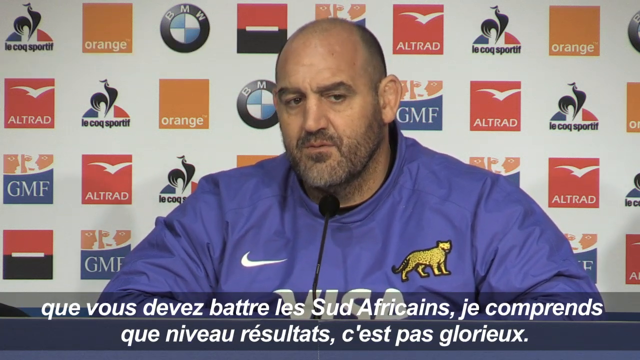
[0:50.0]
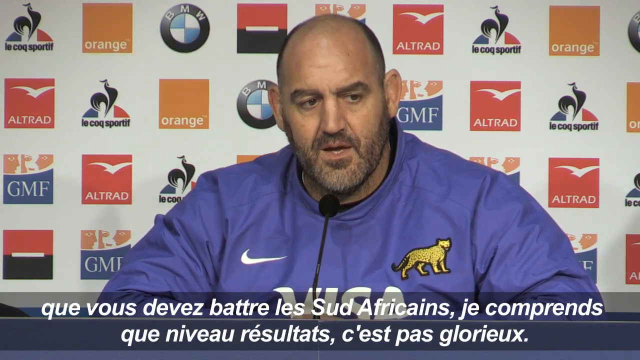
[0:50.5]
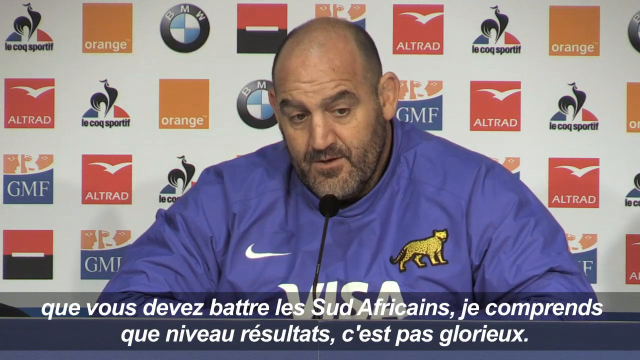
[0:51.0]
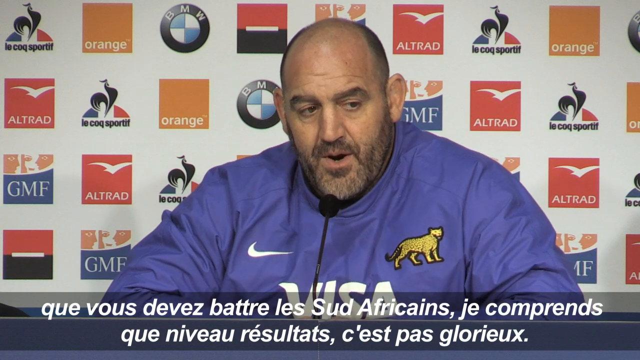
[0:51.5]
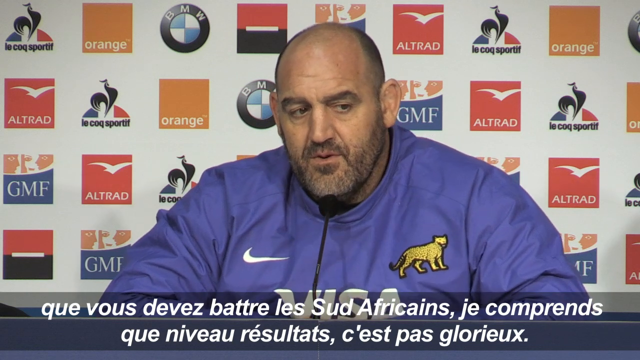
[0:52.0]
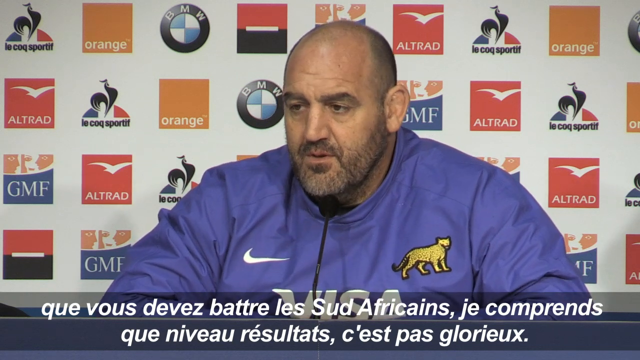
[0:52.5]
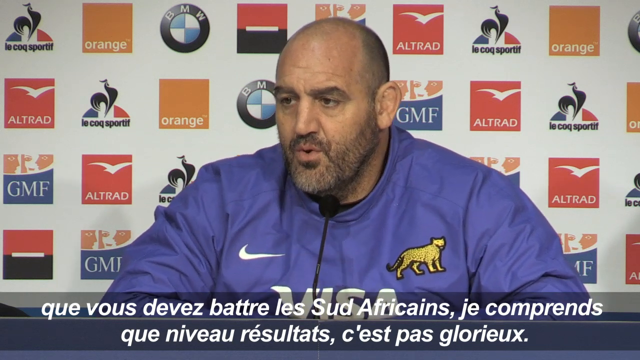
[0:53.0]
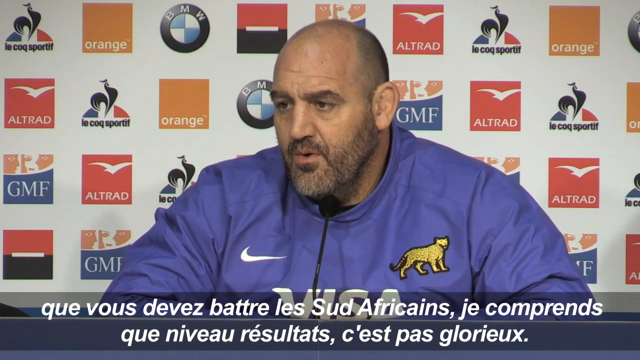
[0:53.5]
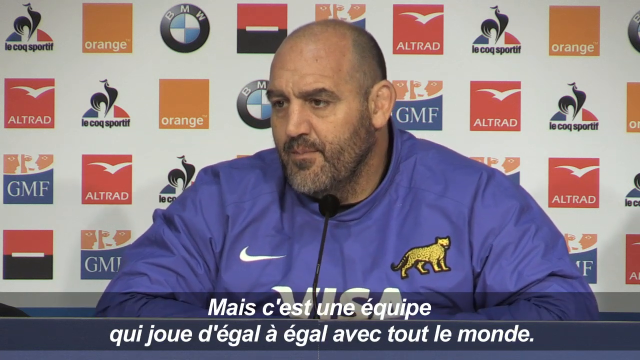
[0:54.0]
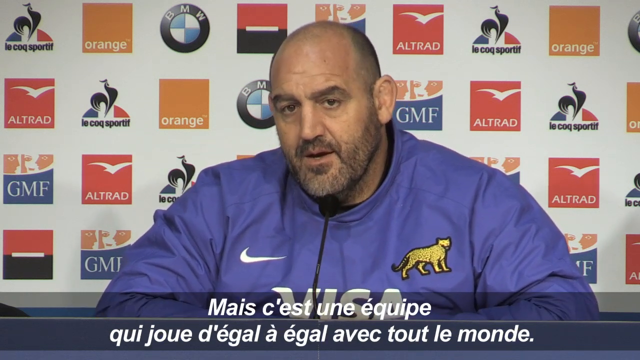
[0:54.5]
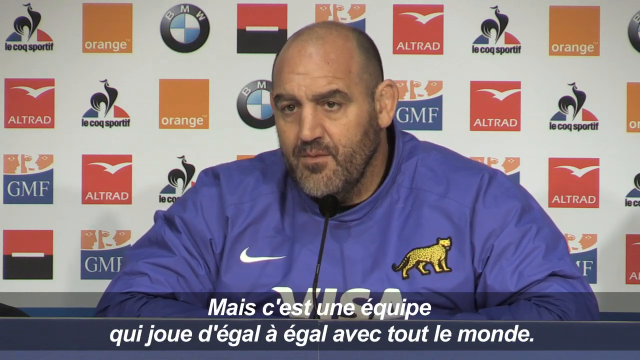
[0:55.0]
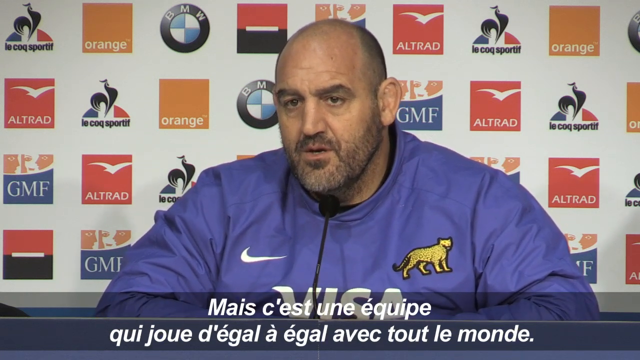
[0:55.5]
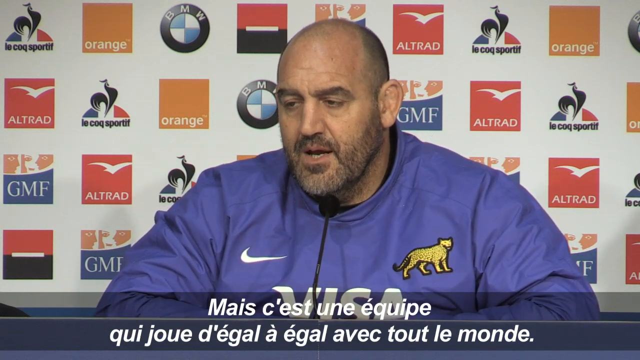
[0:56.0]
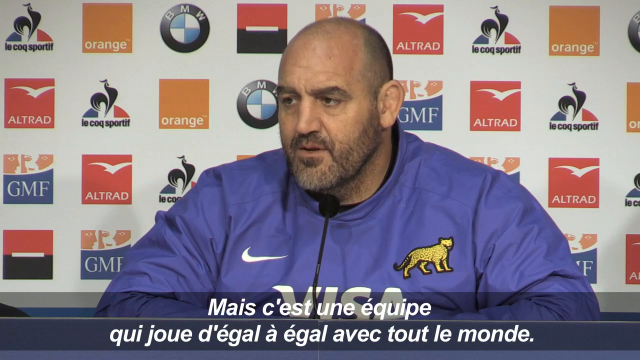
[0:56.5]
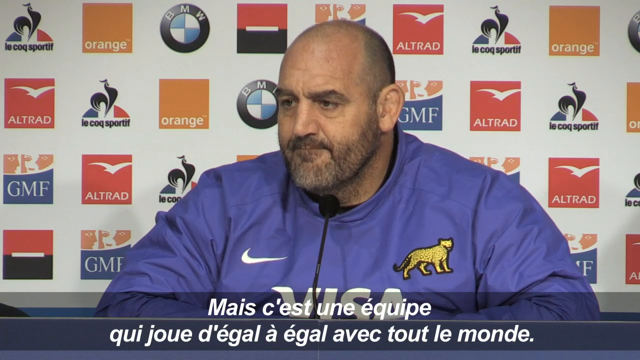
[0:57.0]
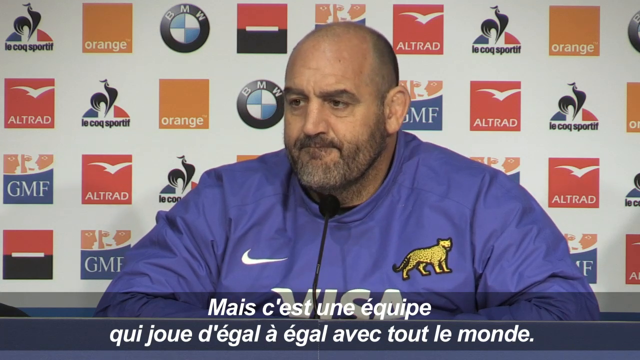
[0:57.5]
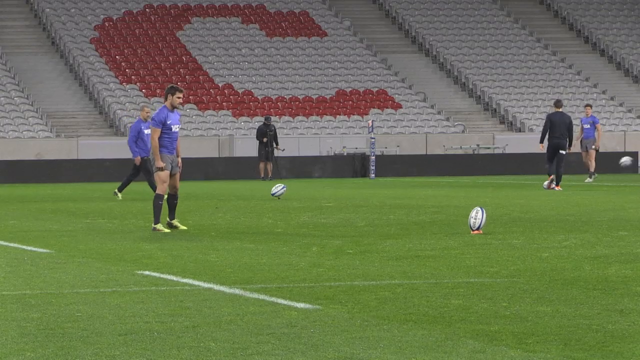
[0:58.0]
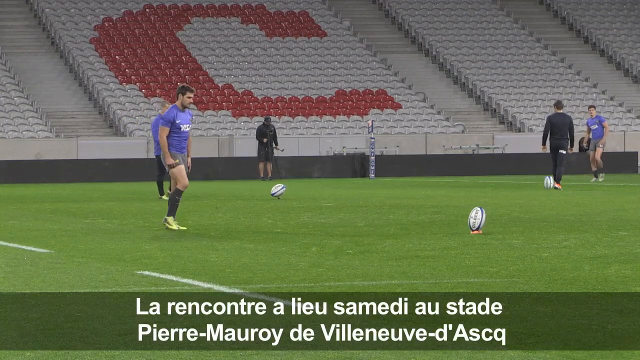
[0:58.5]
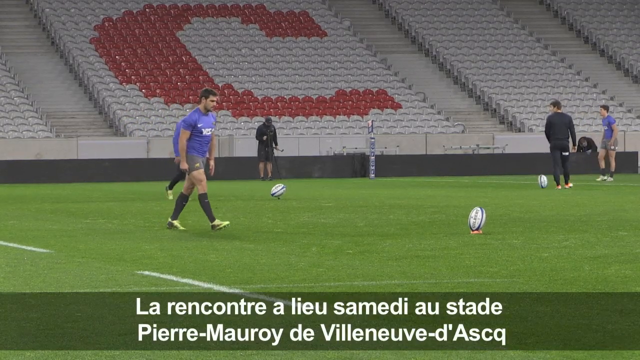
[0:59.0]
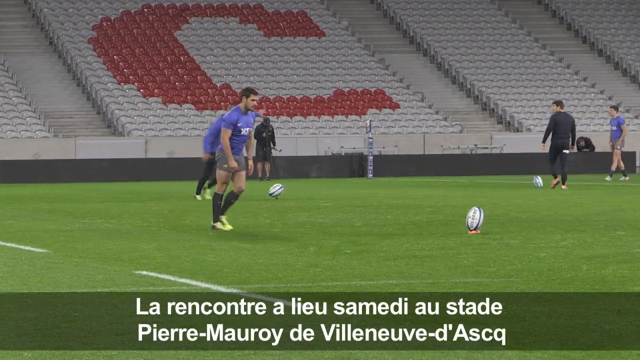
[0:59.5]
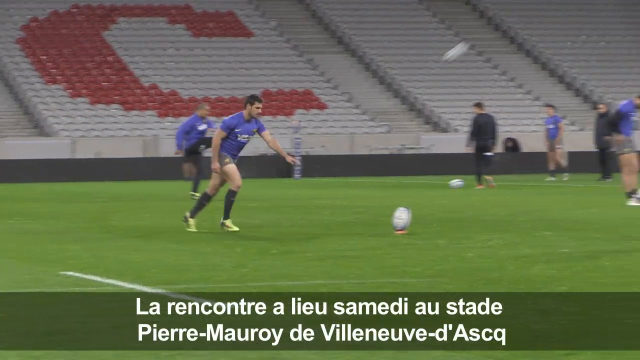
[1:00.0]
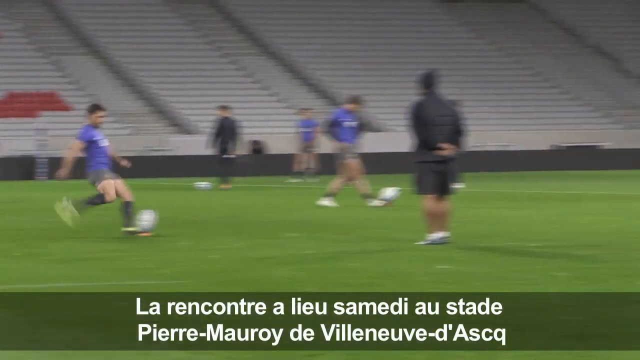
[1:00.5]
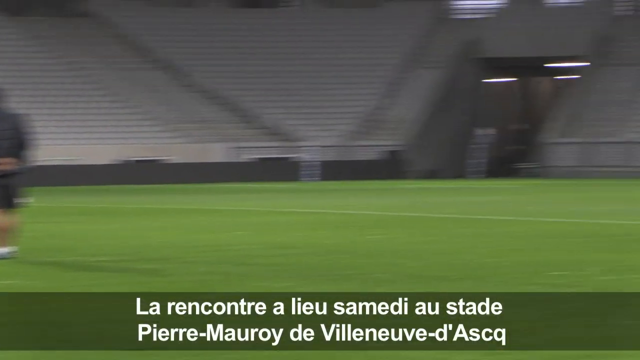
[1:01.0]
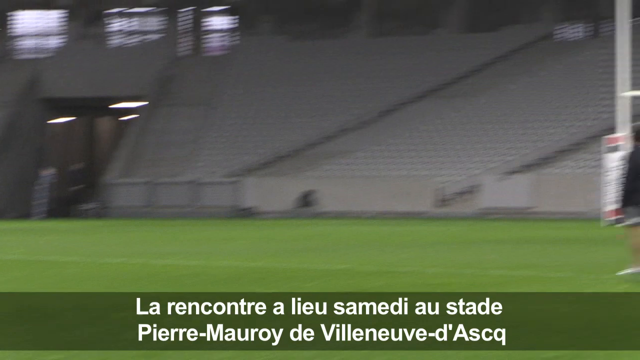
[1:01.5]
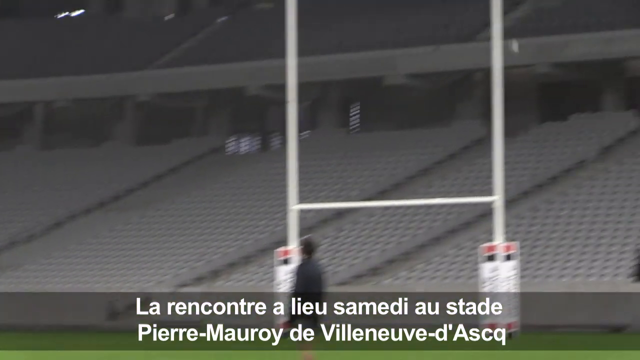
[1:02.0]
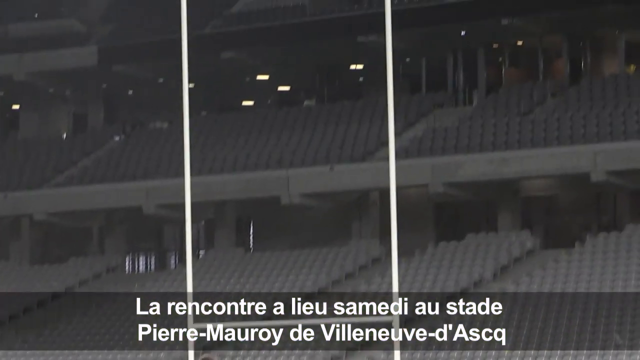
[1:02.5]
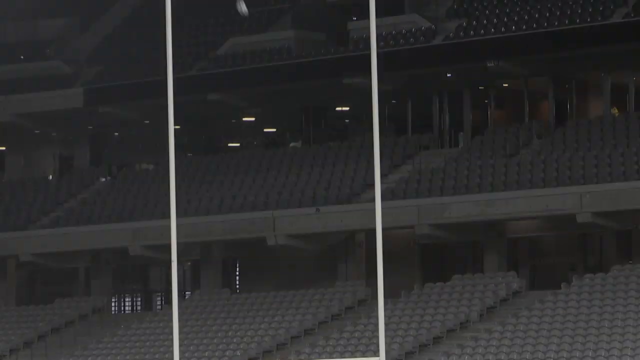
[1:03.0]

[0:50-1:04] The coach continues speaking to the press at an interview, with a French subtitle at the bottom that roughly translates to saying that if they have to fight the South Africans, the results are not going to be glorious. He shrugs. He is about 210 pounds and 6 feet 8. He has a short beard, shaved hair, brown eyes, arched eyebrows, and a purple to blue anorak worn over a black t-shirt. Then, on a practice field, a ball is kicked toward the goal post and falls a bit to the right.